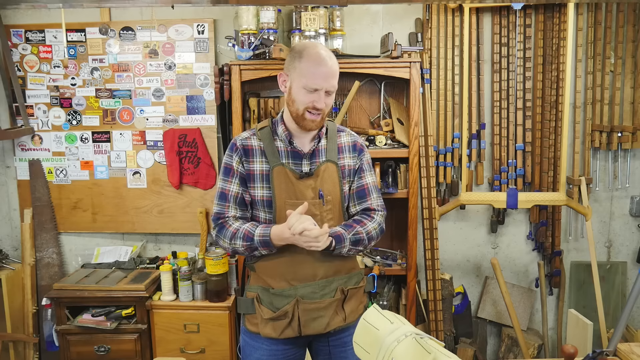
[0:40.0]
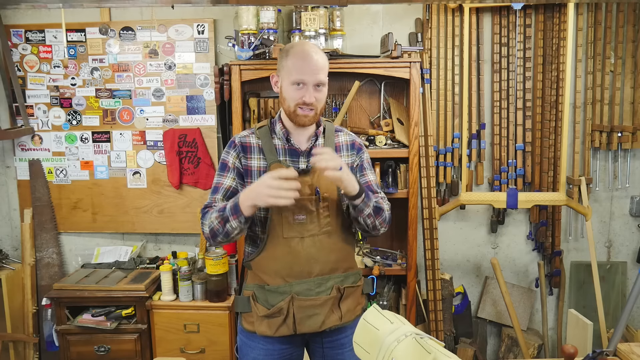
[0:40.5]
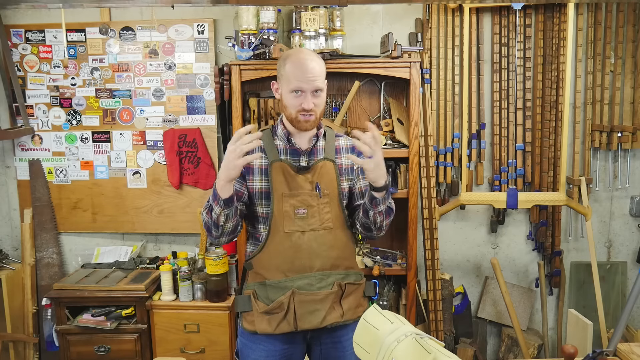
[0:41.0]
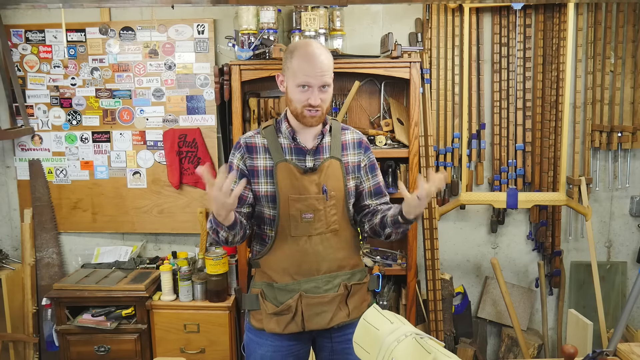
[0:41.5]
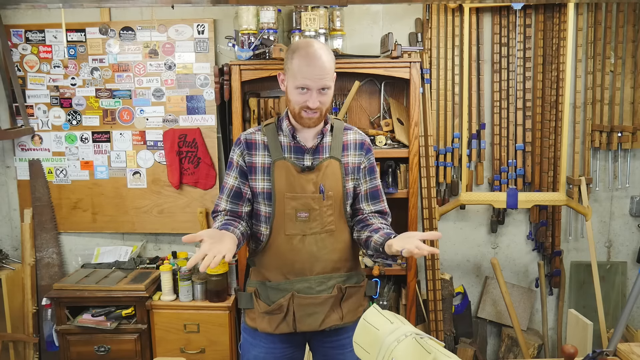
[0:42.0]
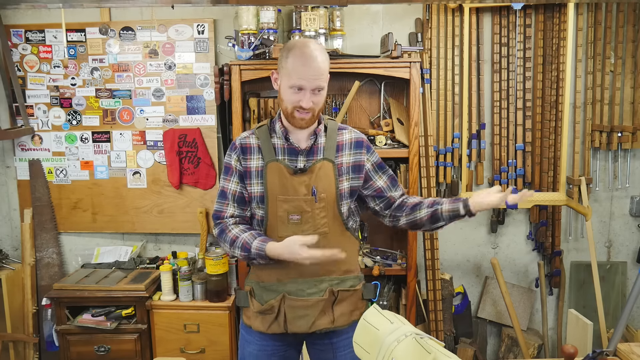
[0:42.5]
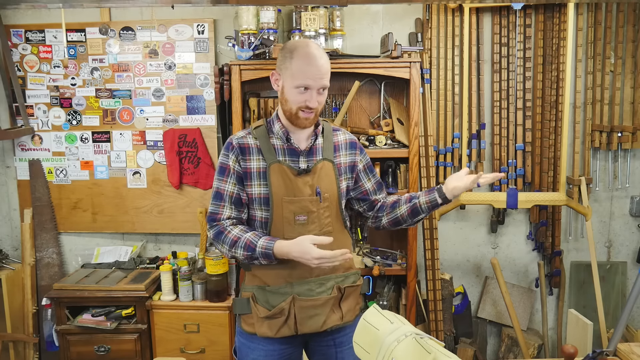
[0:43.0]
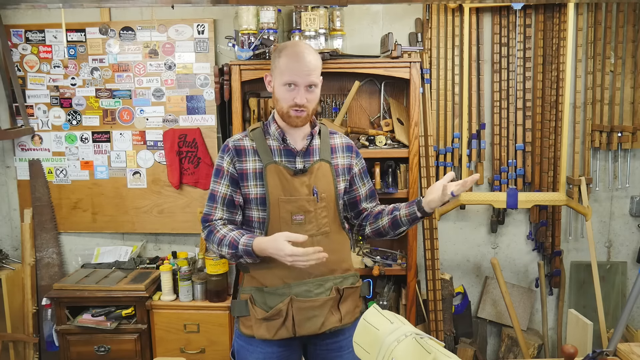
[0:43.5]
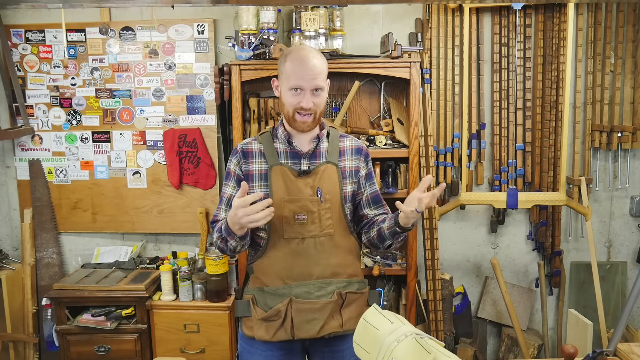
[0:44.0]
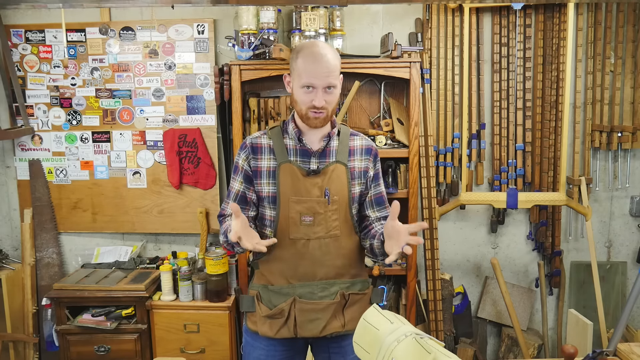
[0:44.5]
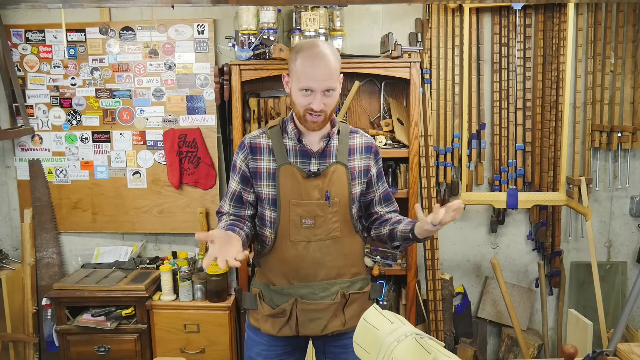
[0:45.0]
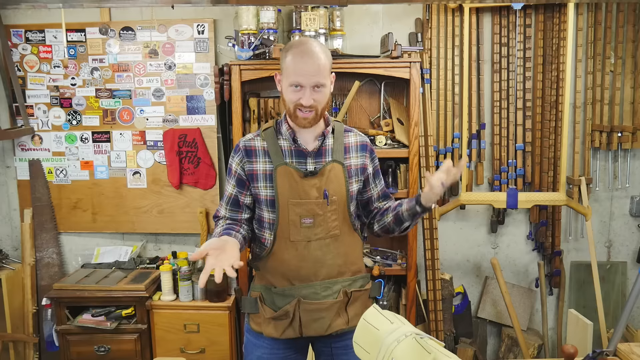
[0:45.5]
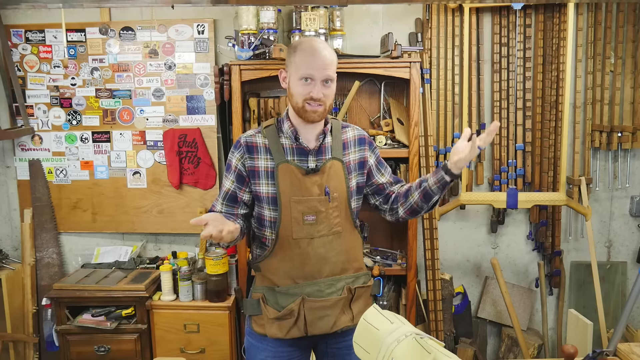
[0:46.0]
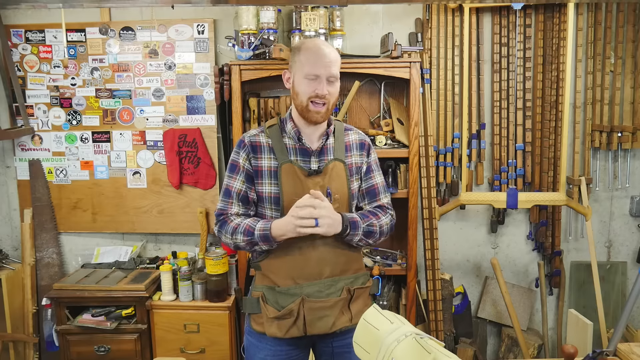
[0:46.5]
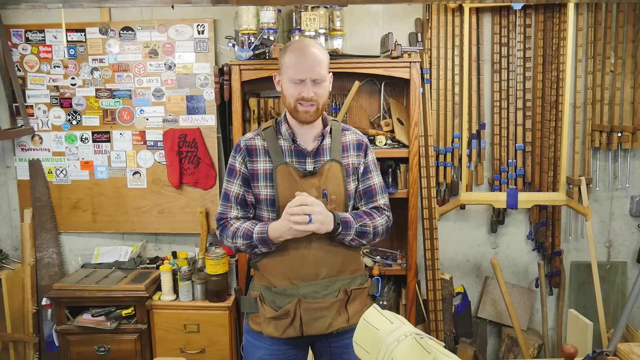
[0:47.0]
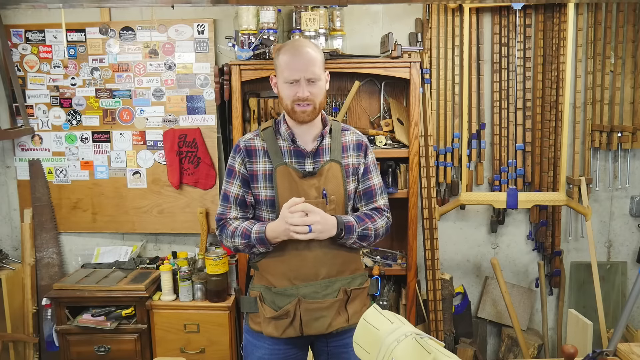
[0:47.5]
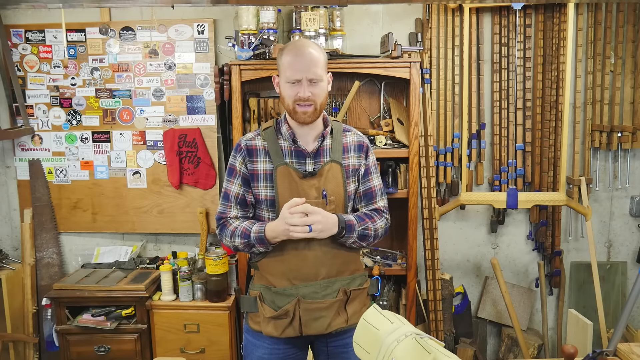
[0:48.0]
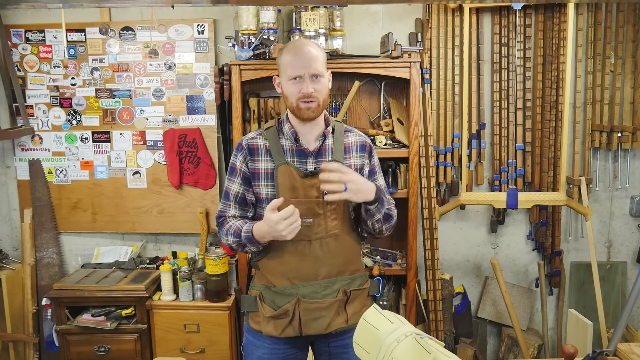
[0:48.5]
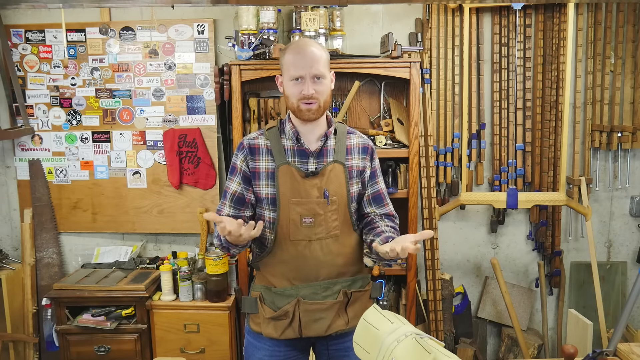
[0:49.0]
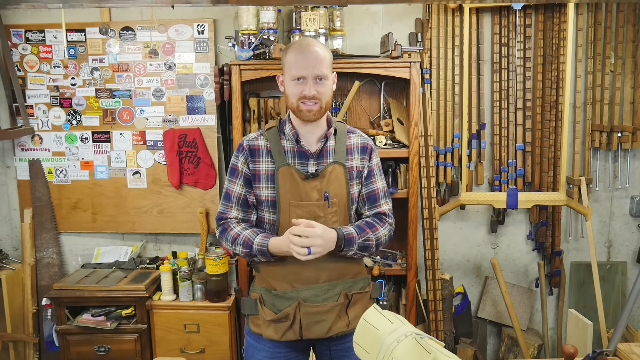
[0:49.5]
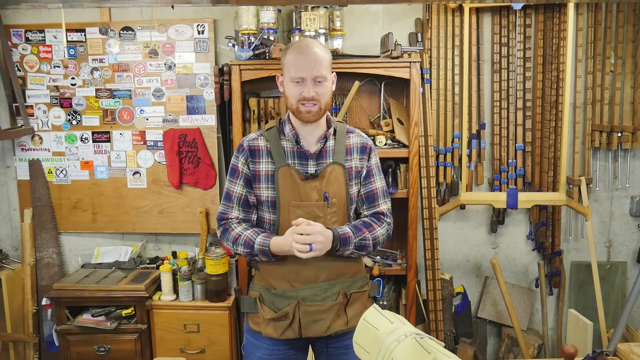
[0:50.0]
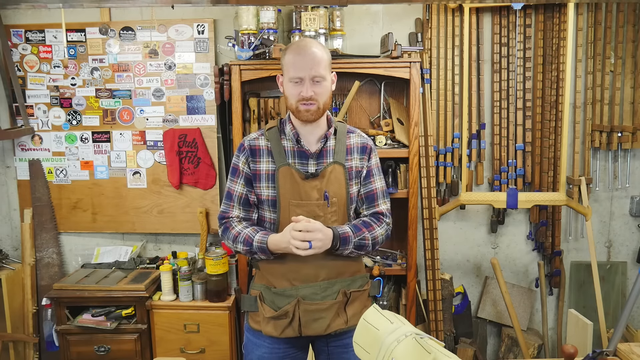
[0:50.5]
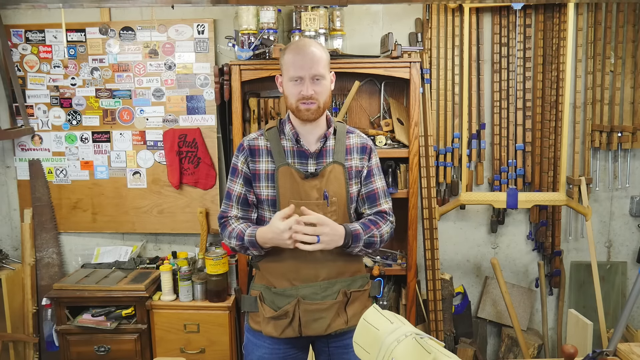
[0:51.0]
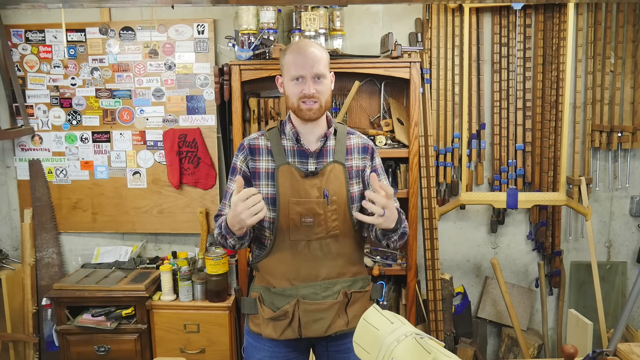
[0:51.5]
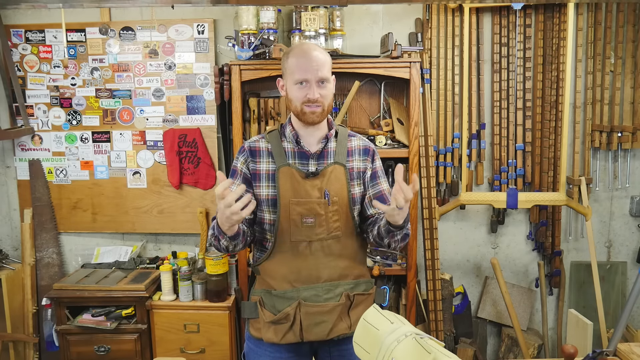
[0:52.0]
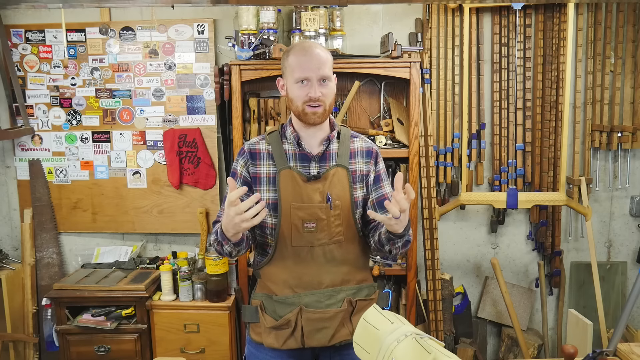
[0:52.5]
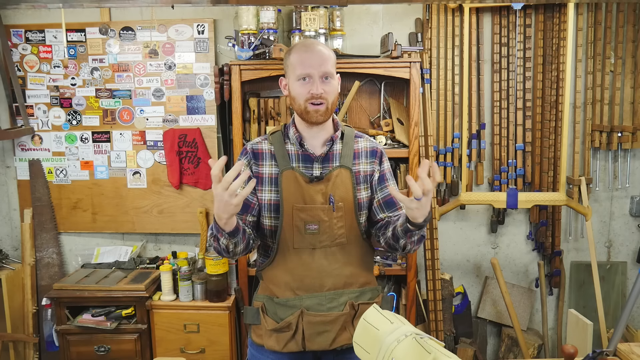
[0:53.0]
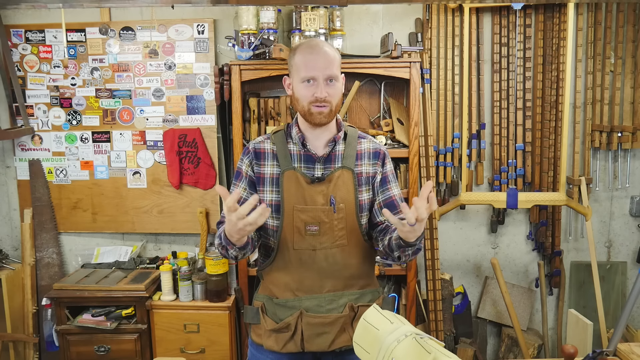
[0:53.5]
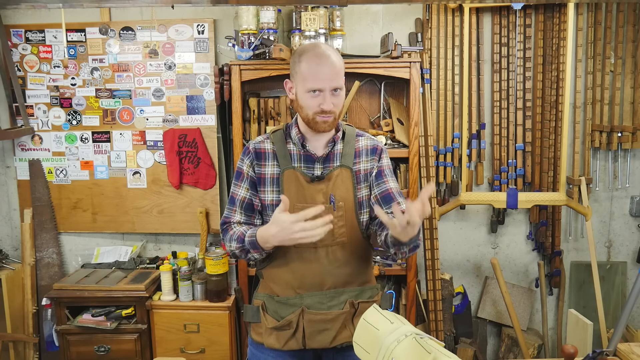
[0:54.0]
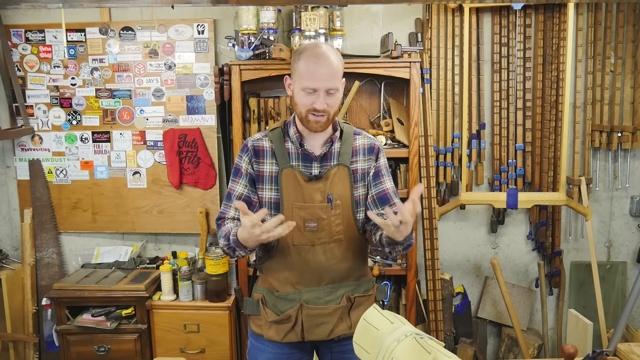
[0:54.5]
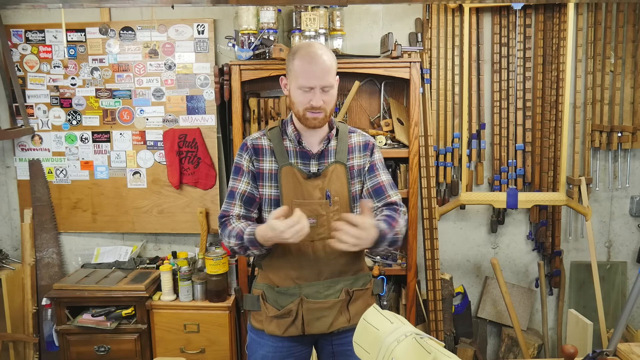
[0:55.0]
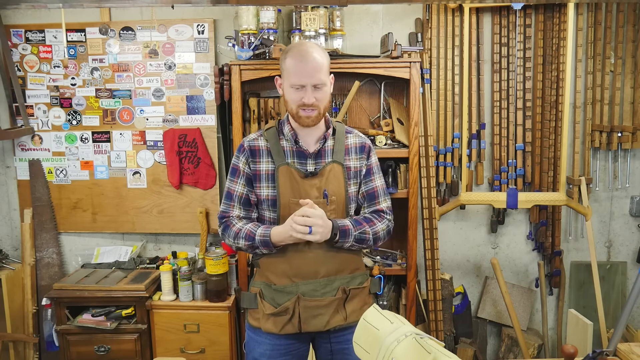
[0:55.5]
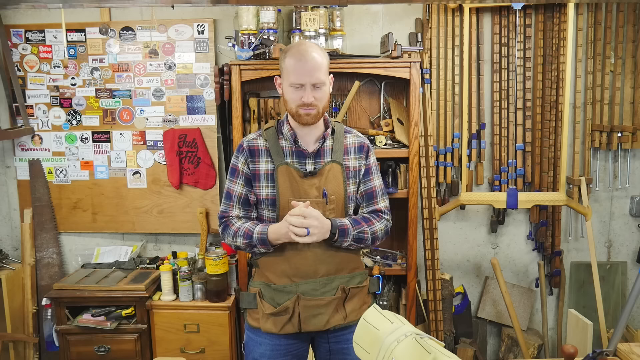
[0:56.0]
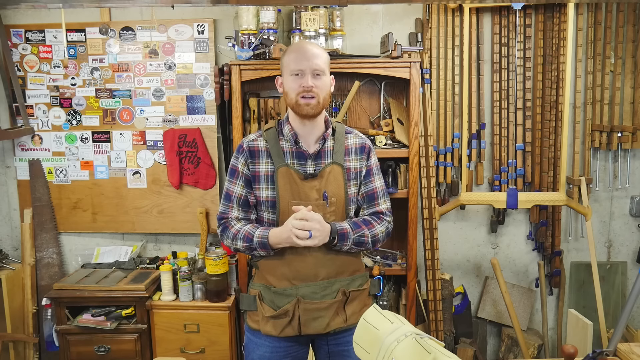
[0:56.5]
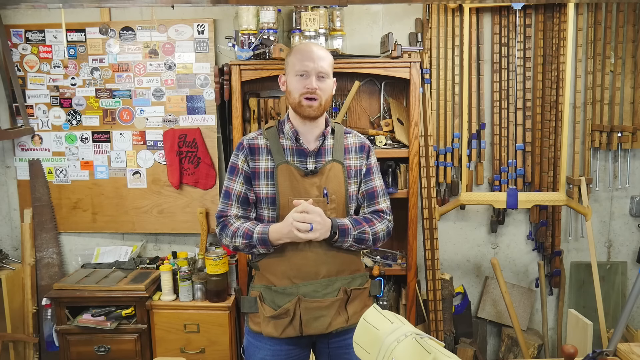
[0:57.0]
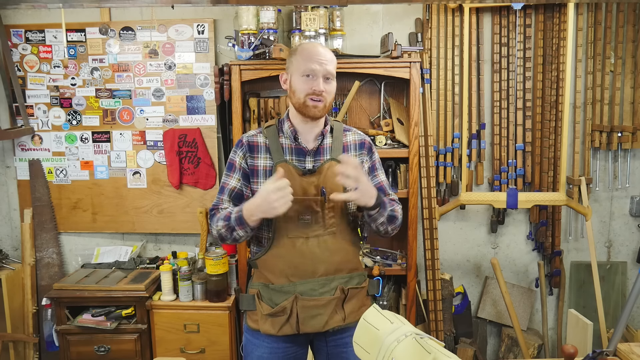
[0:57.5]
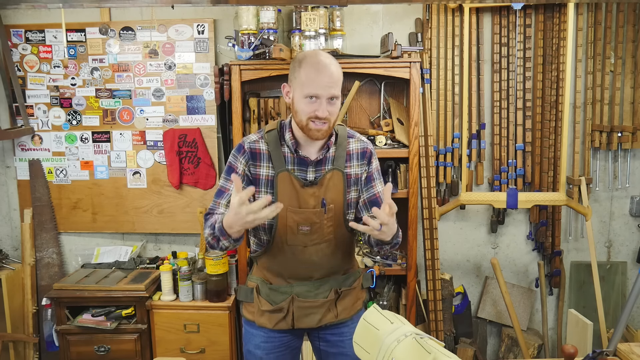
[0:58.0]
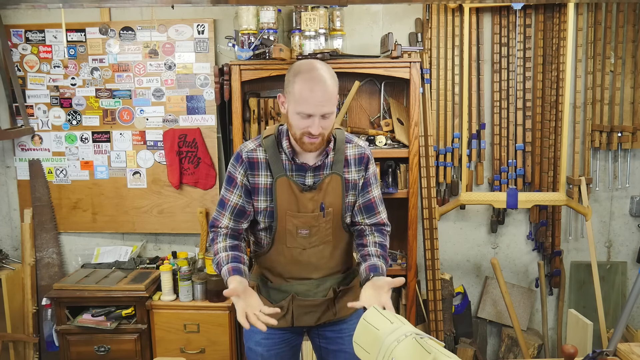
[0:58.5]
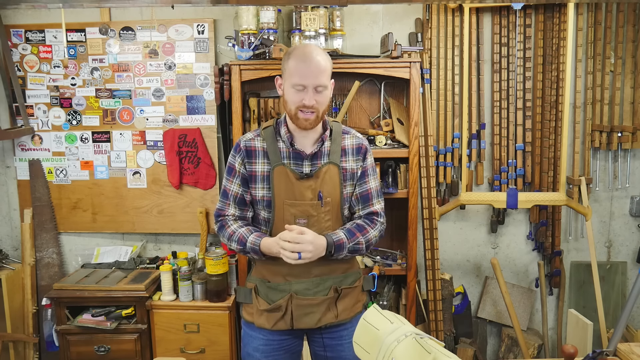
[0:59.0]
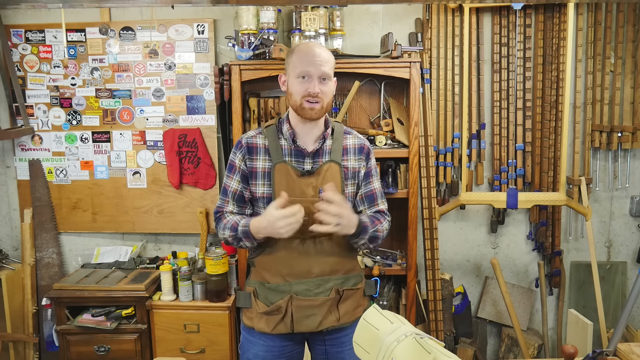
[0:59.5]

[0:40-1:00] Plans for his projects are visible in the background. The man looks simple and neat, wears a ring on his finger, and keeps talking.